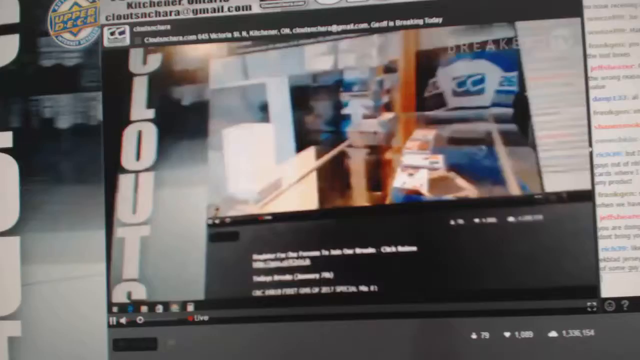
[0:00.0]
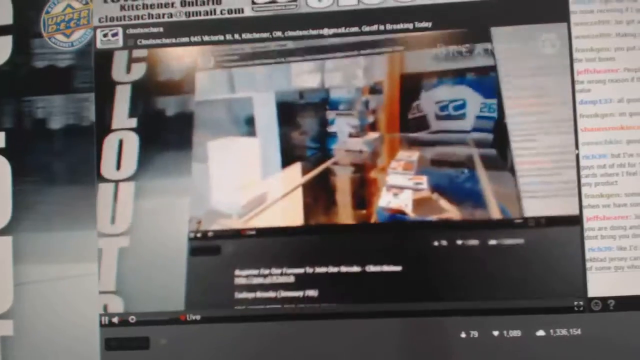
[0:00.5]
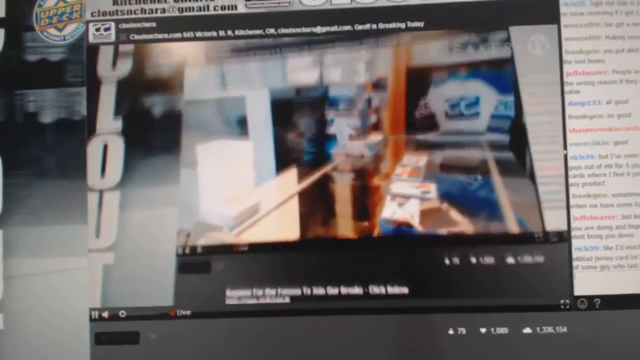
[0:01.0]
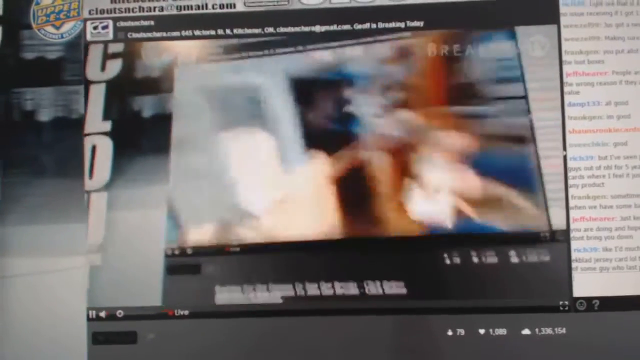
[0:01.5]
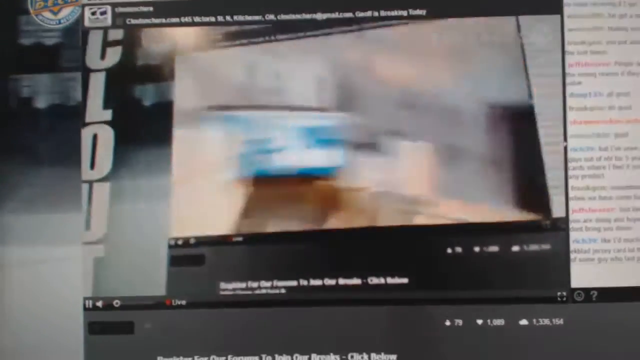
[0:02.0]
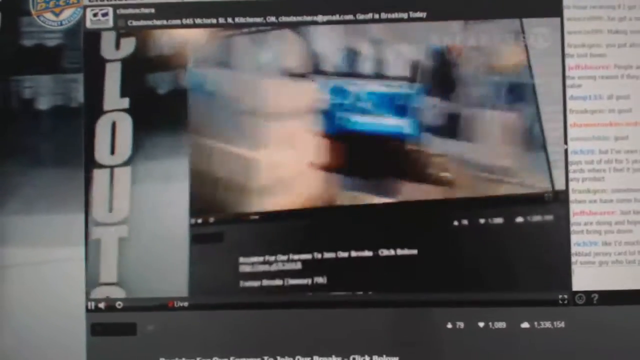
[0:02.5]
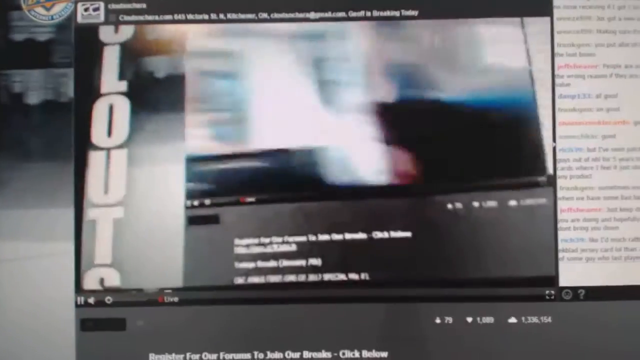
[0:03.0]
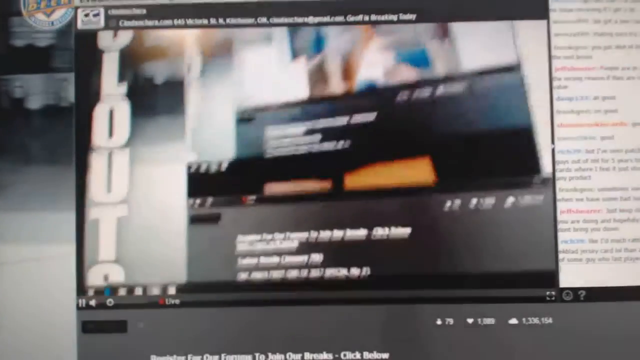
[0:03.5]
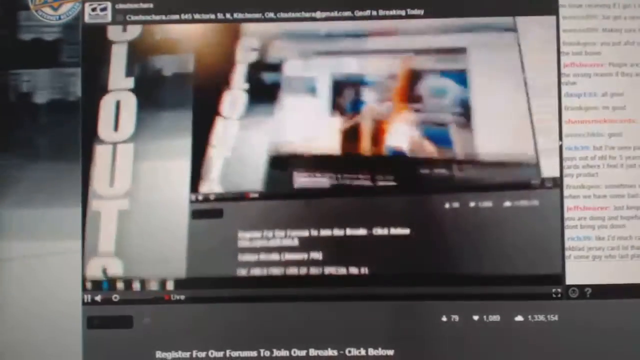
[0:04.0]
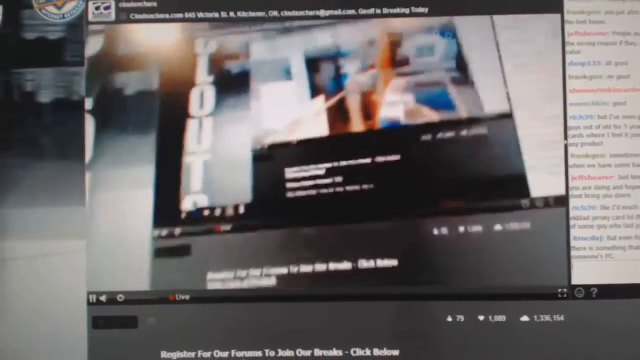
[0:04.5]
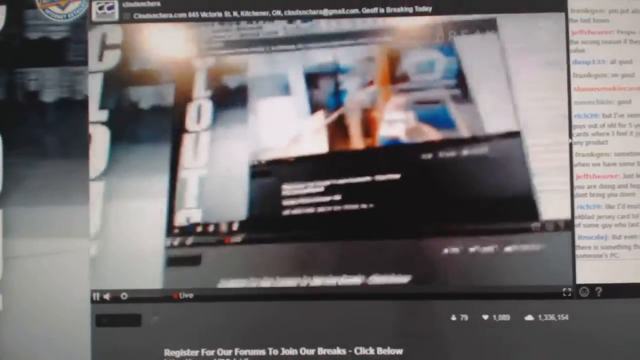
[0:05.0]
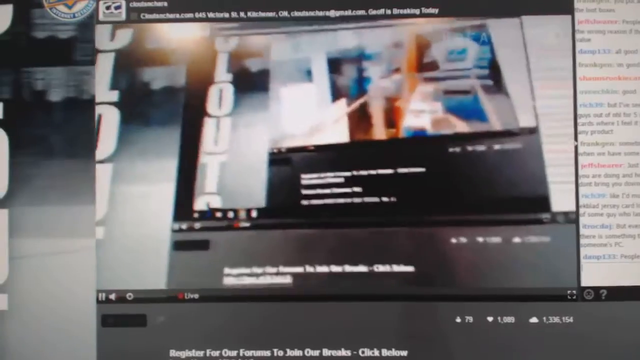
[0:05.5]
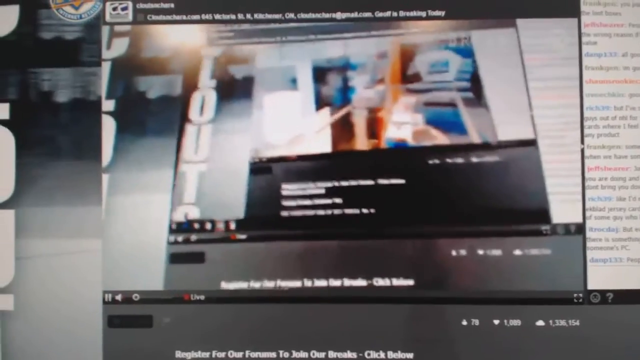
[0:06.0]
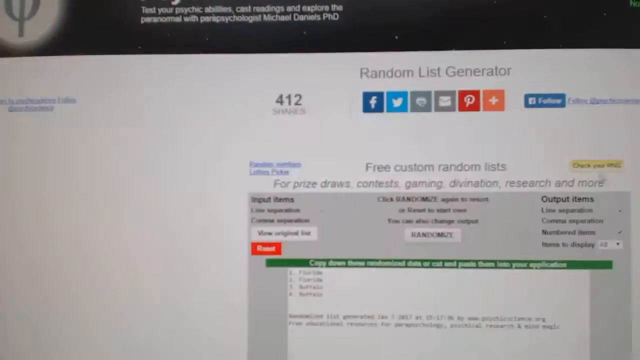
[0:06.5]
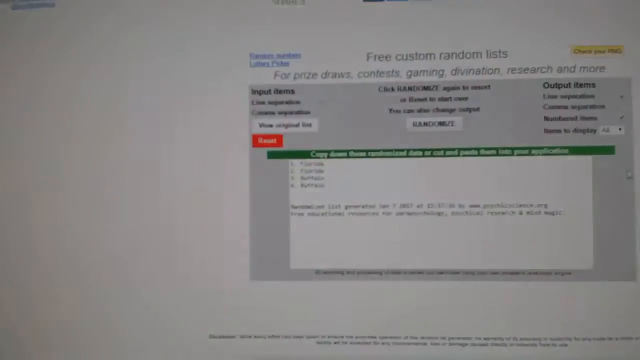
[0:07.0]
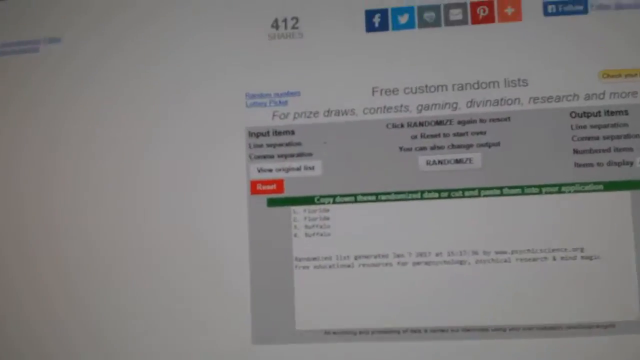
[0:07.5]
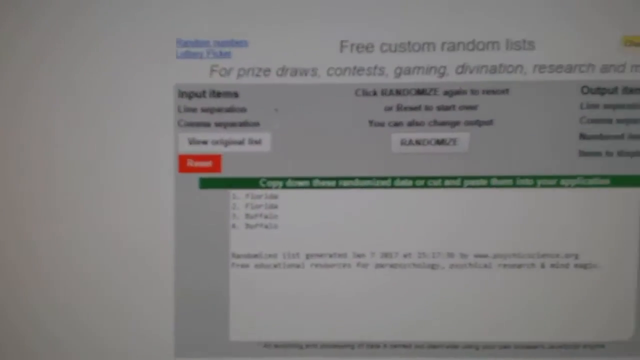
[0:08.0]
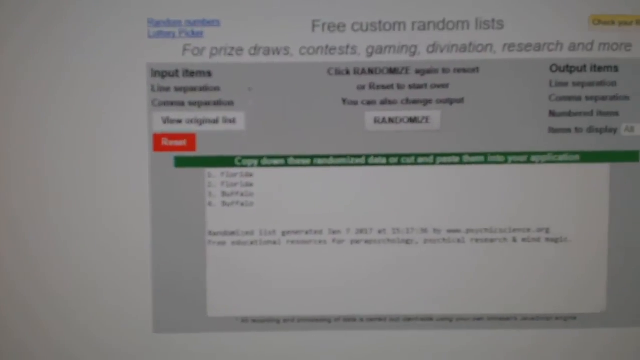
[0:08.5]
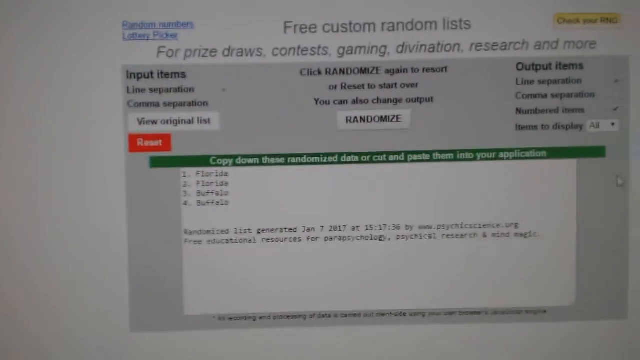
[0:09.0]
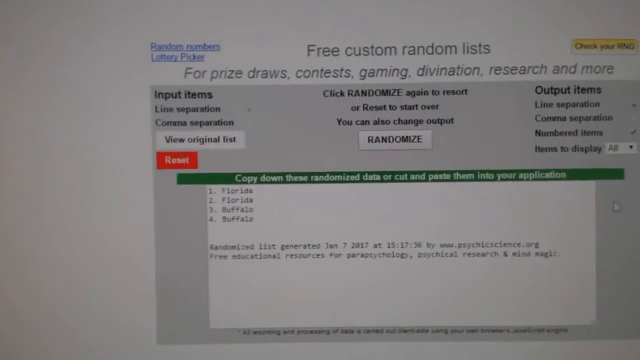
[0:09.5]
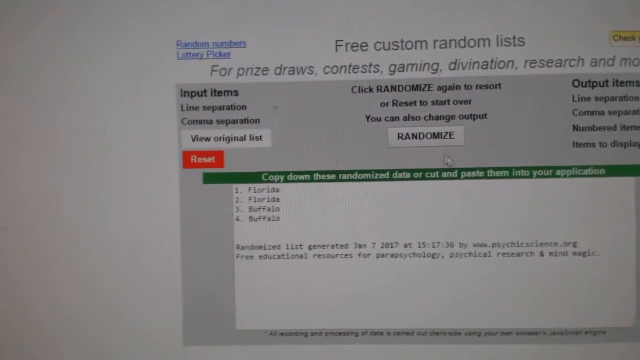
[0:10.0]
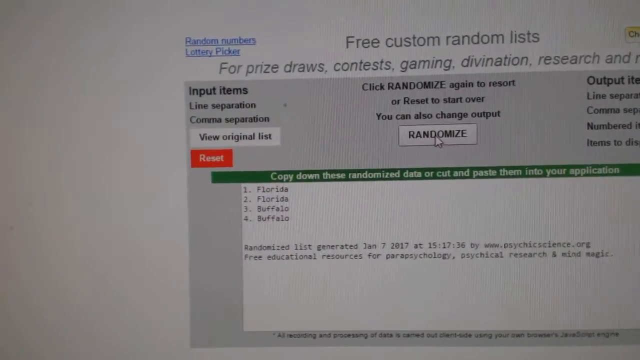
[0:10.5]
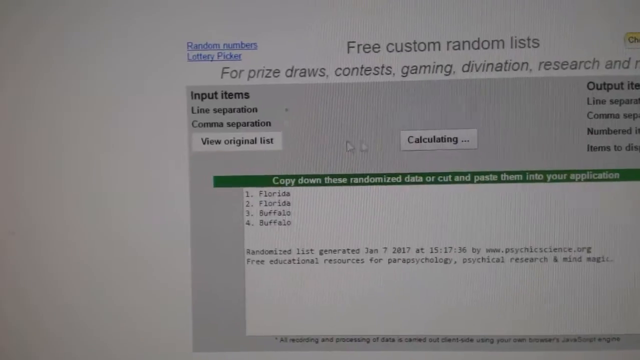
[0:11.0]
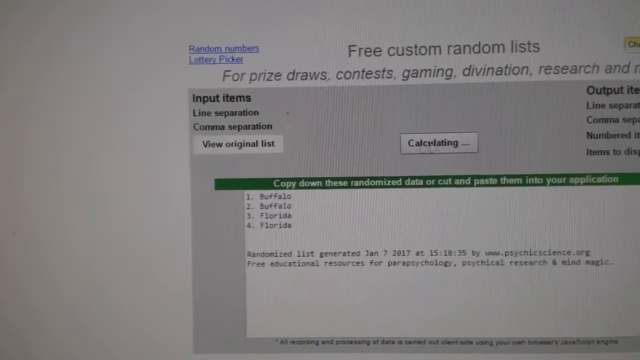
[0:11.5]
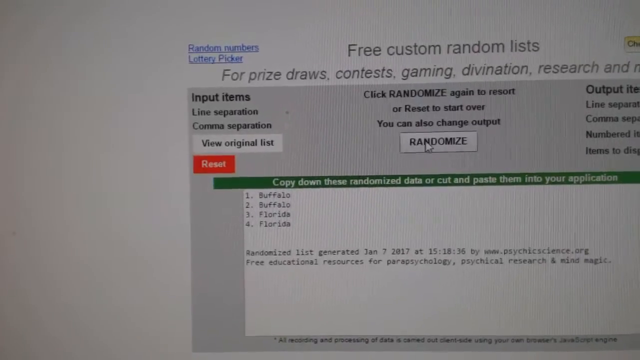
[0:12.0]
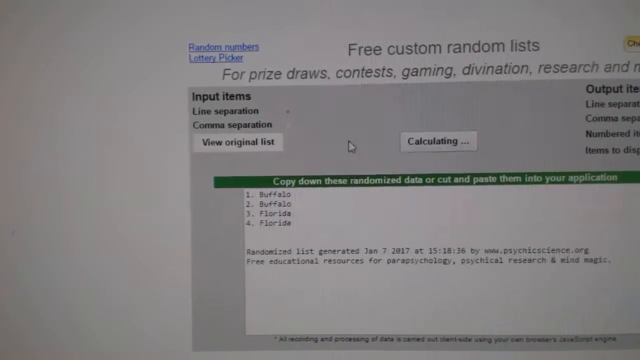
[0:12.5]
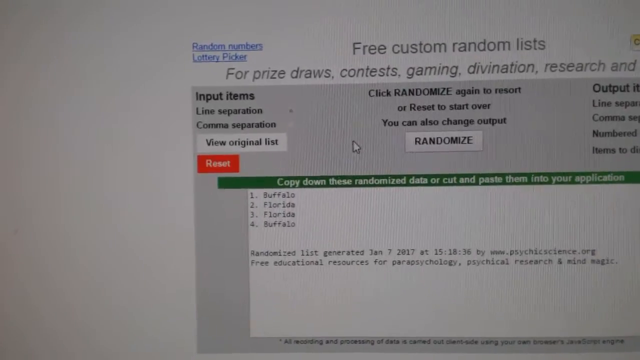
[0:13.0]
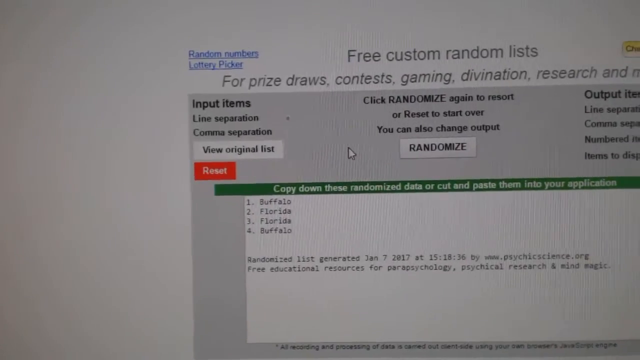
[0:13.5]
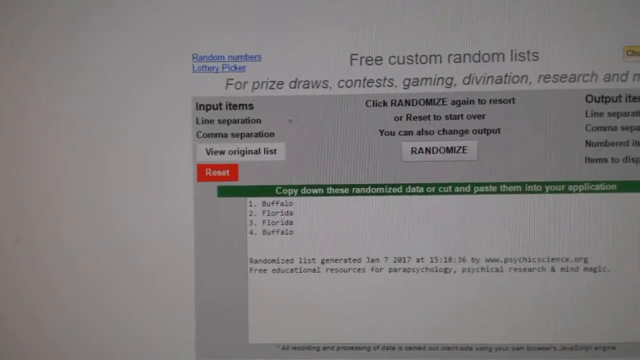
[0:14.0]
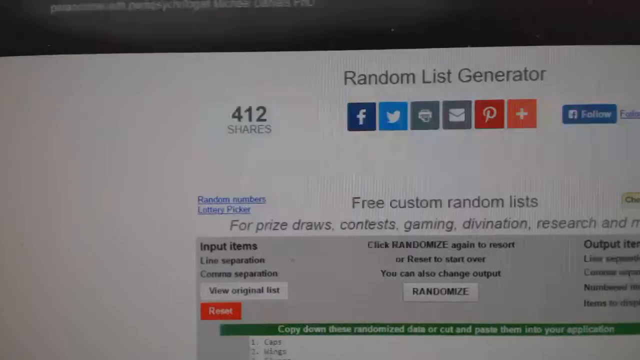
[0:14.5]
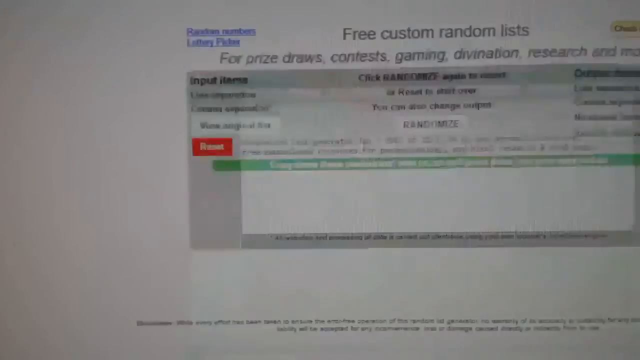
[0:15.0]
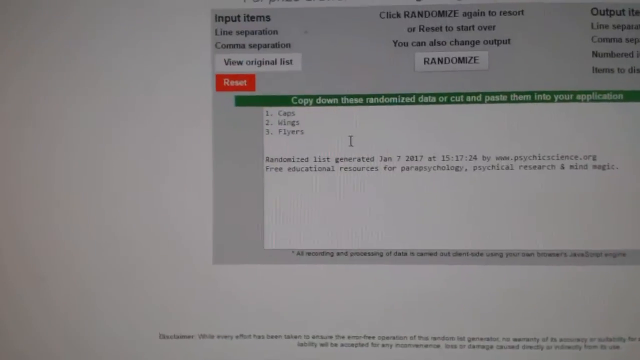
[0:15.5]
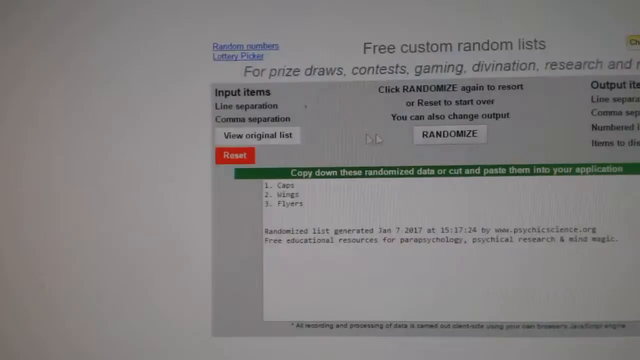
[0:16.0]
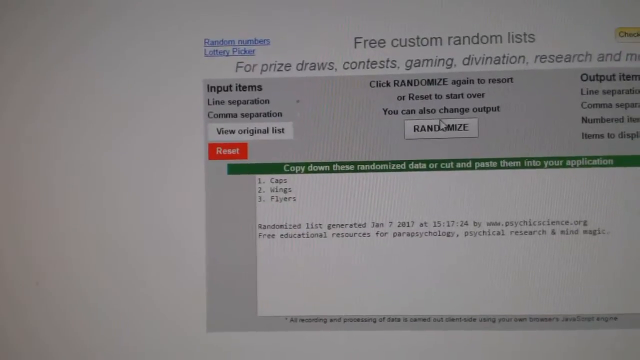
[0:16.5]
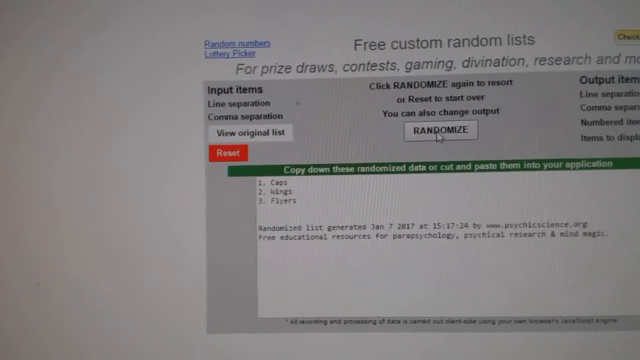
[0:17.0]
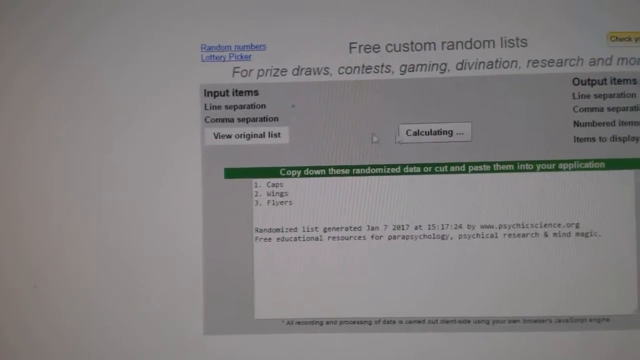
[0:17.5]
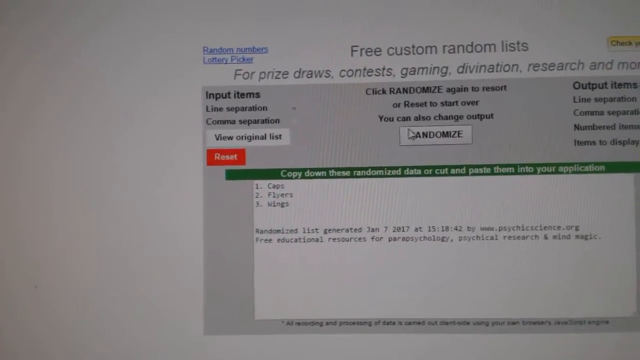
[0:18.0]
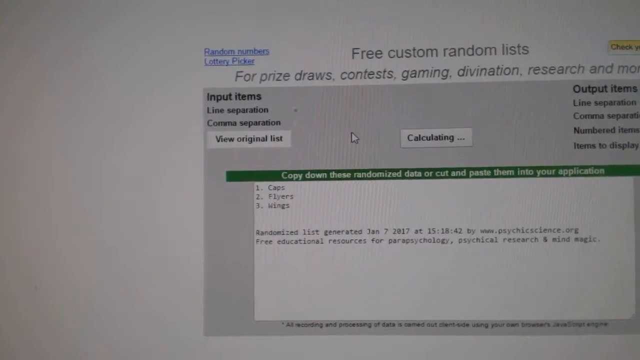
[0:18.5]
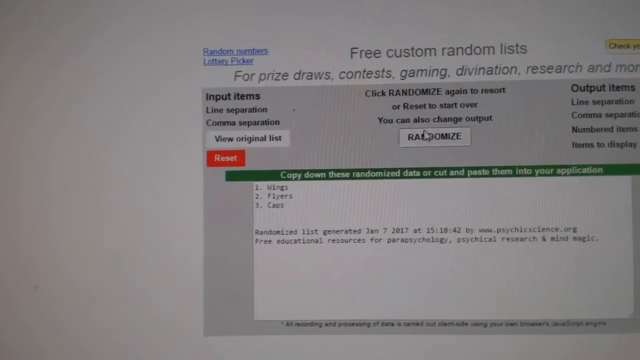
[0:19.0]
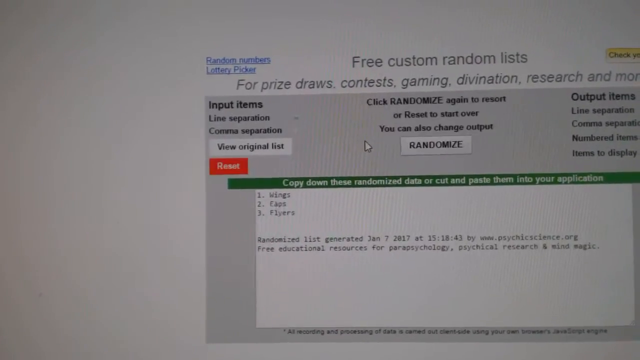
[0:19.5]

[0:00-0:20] The video looks almost like someone is videotaping a computer monitor or a TV screen. On the left-hand side are the letters C-L-O-U-T, apparently spelling "clout." What is being watched seems to be a video of an office of some sort, though the camera moves very quickly. A black banner runs along the bottom, but its text cannot be made out. The view then moves to possibly a different part of the screen or a different area, with a white background and social tags up top. Black text reads "Free Custom Random Lists," and underneath is a roughly gray rectangular shape. A mouse pointer moves around, making it clear this is a computer screen. The camera moves up and down slightly. A button in the center reads "Calculating," showing that calculations are taking place.